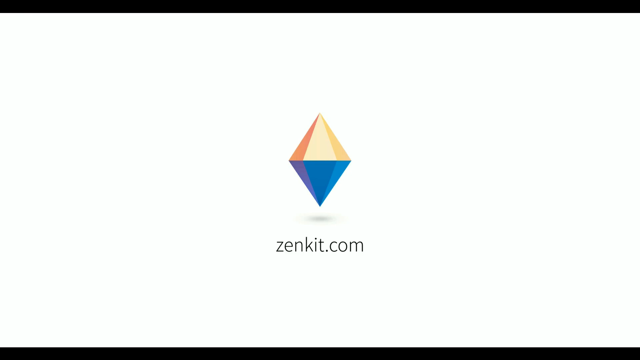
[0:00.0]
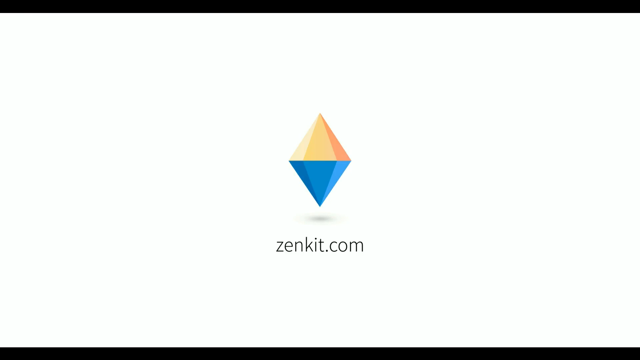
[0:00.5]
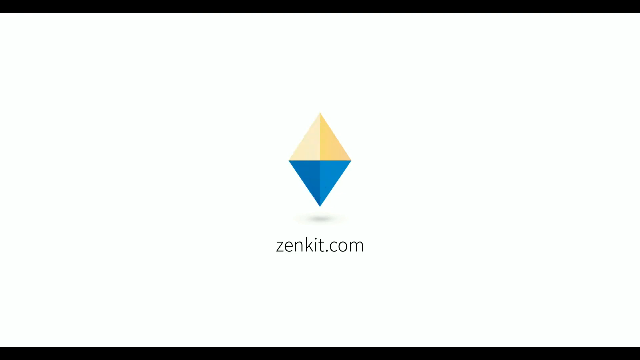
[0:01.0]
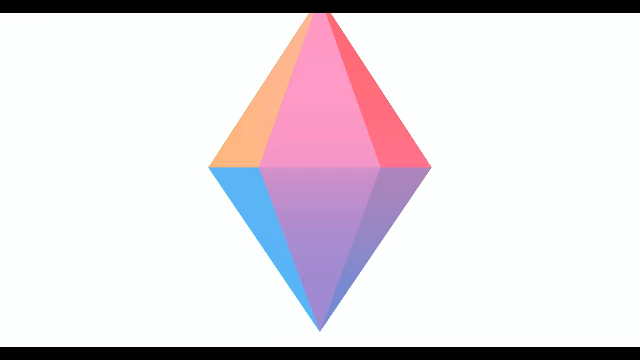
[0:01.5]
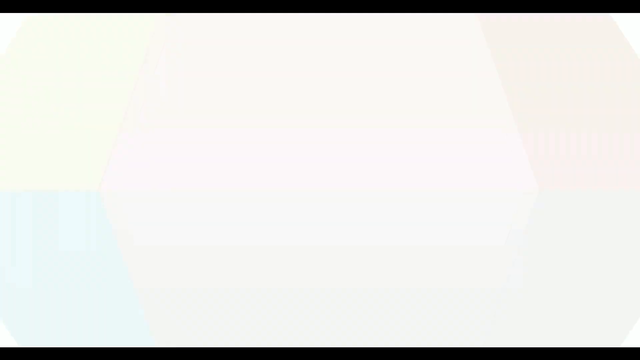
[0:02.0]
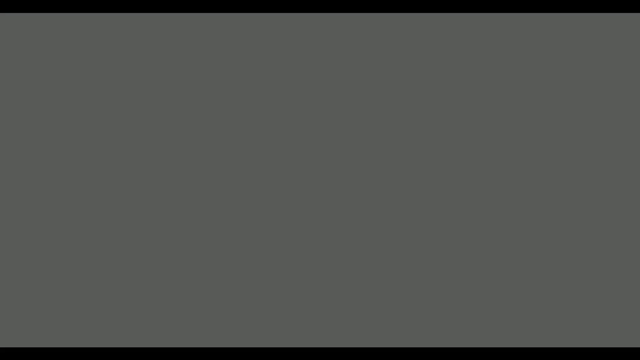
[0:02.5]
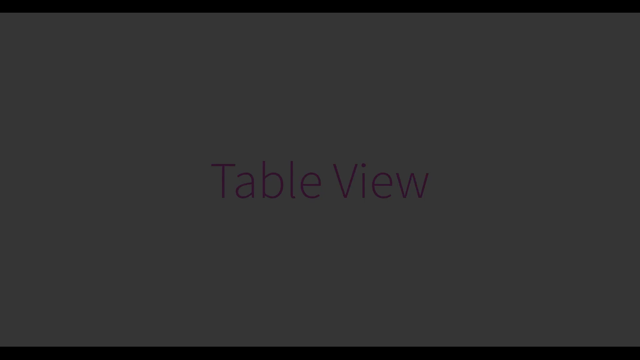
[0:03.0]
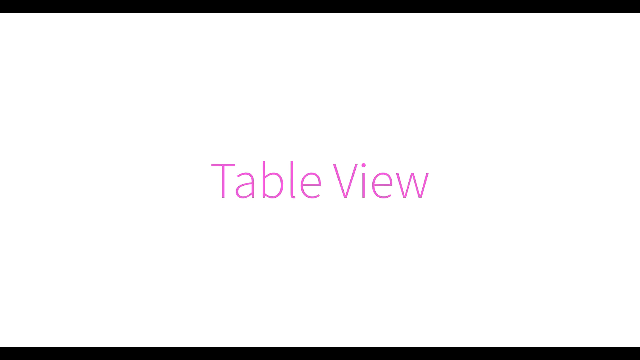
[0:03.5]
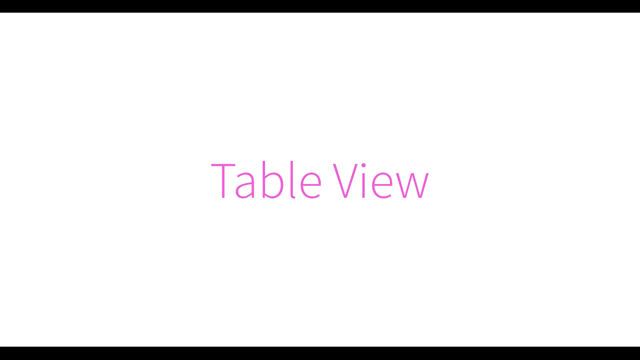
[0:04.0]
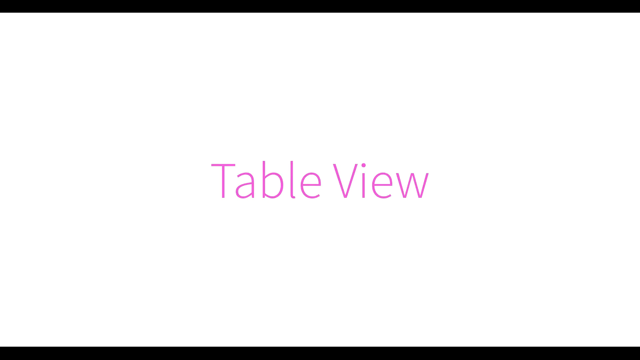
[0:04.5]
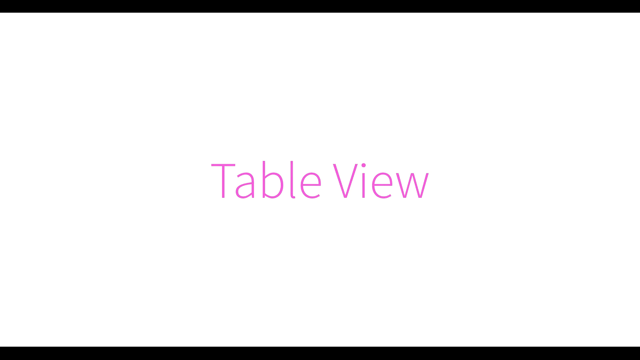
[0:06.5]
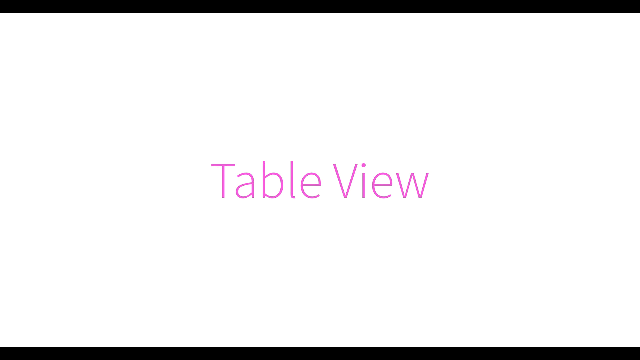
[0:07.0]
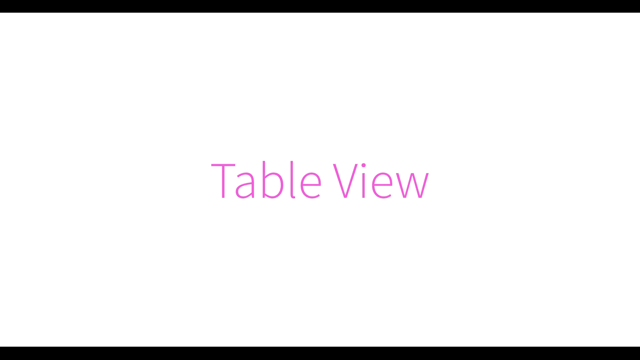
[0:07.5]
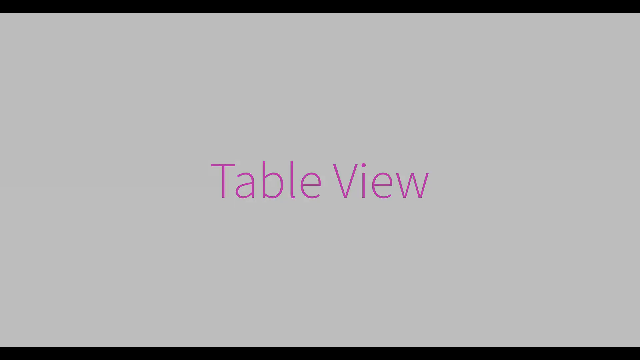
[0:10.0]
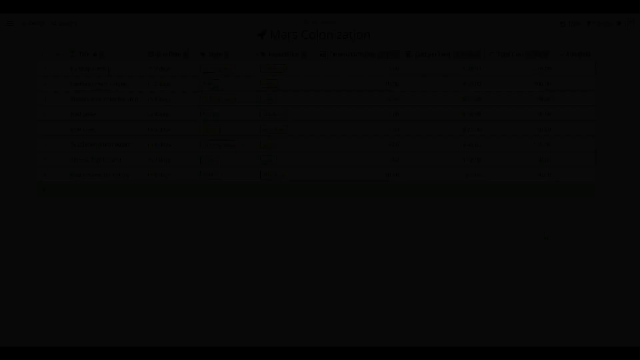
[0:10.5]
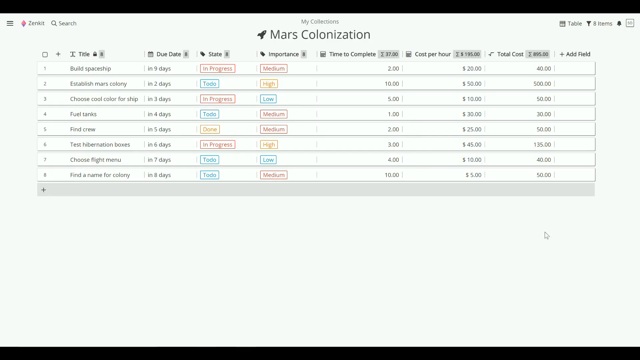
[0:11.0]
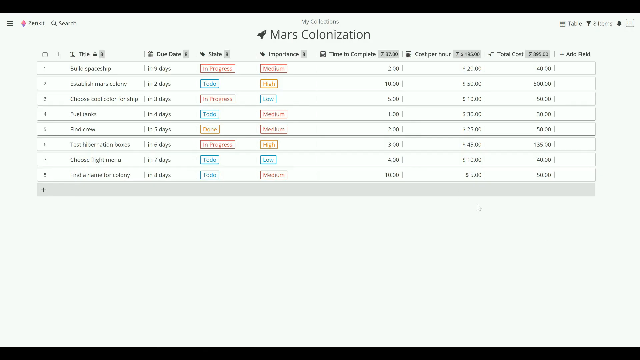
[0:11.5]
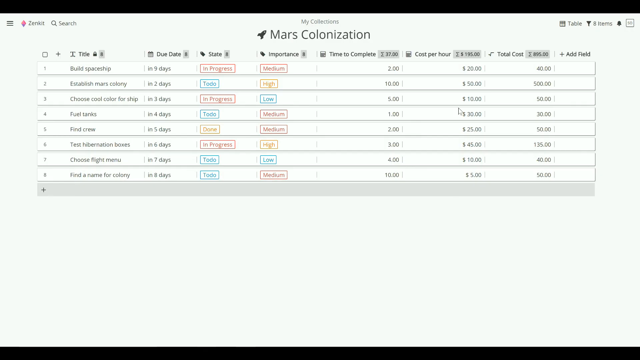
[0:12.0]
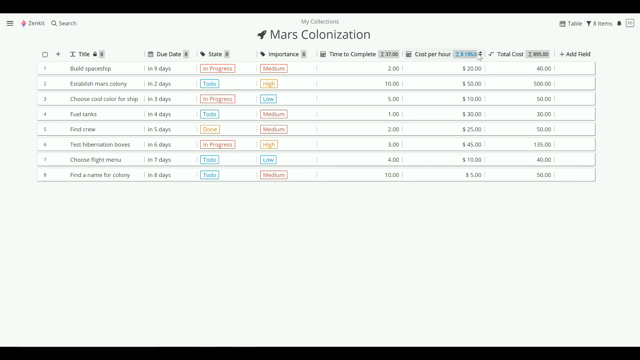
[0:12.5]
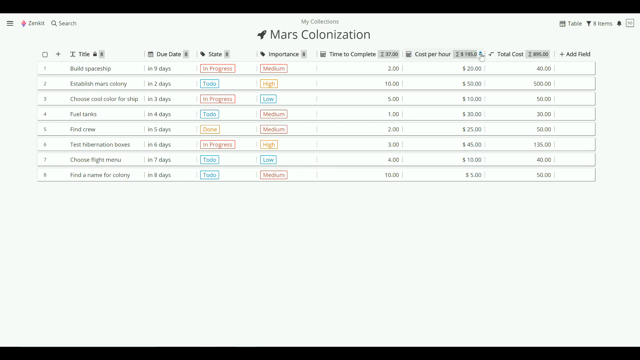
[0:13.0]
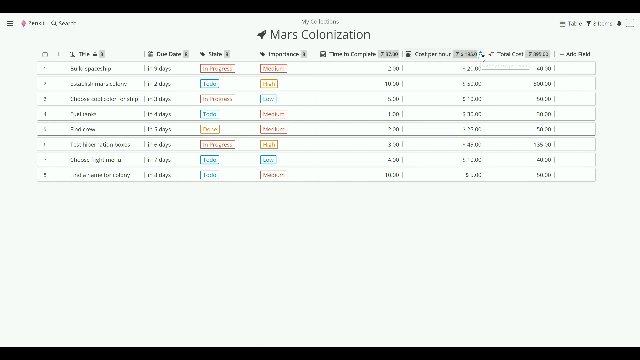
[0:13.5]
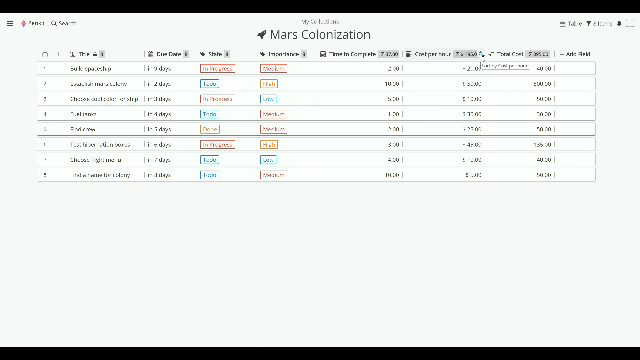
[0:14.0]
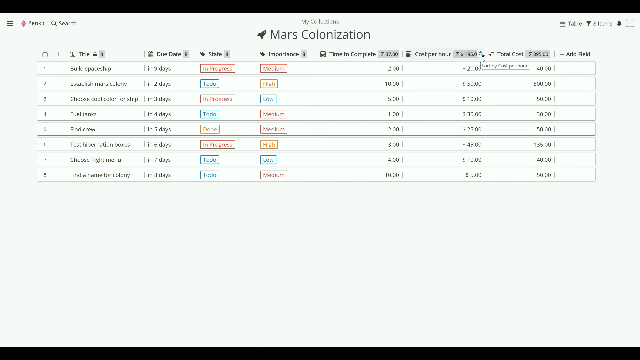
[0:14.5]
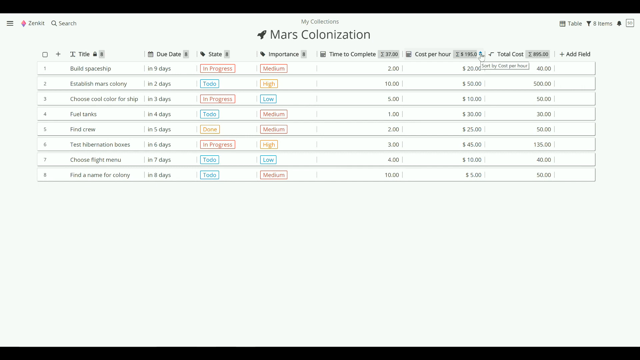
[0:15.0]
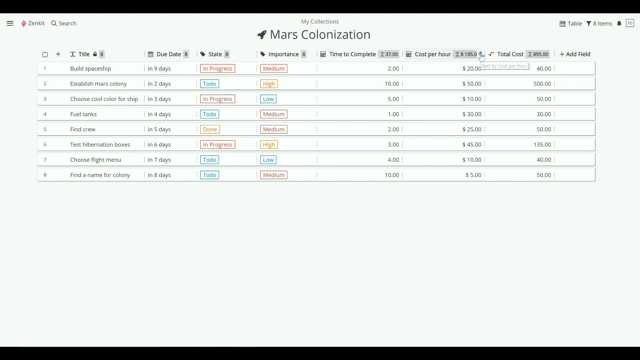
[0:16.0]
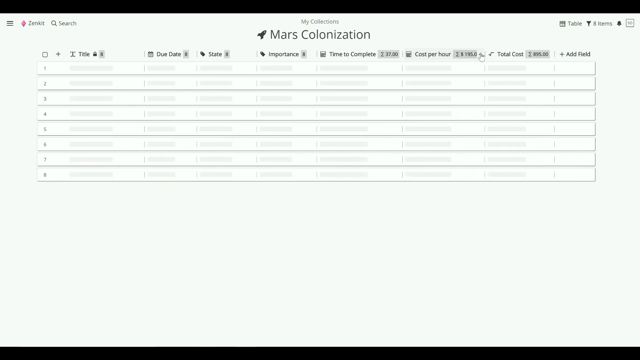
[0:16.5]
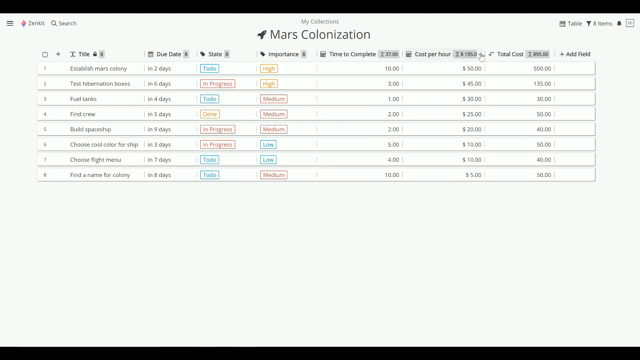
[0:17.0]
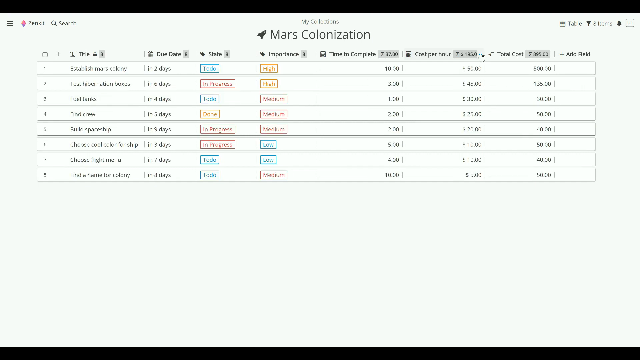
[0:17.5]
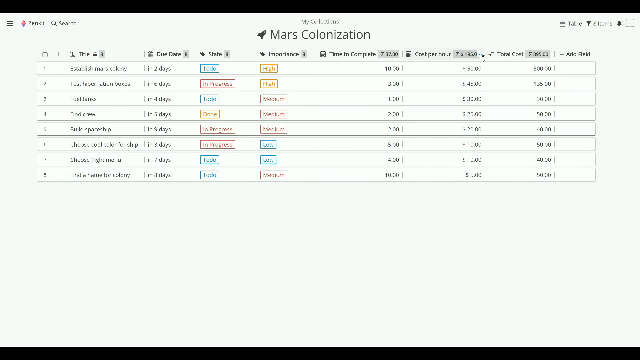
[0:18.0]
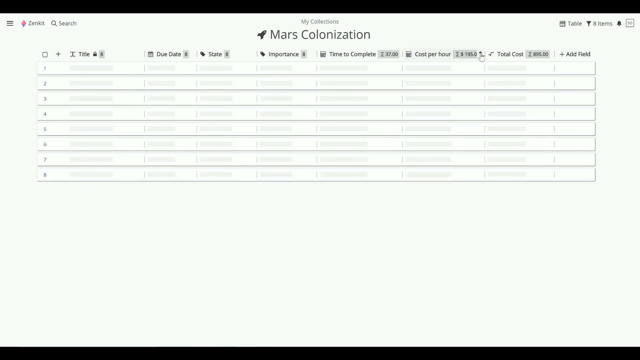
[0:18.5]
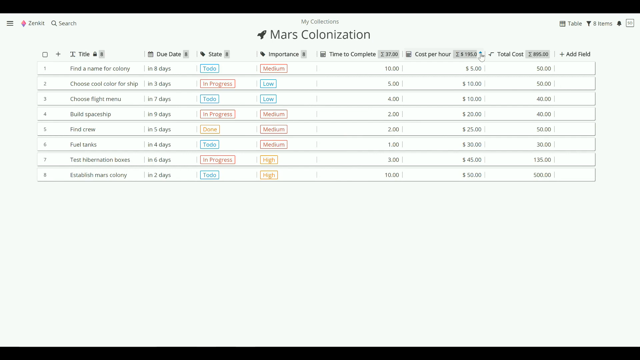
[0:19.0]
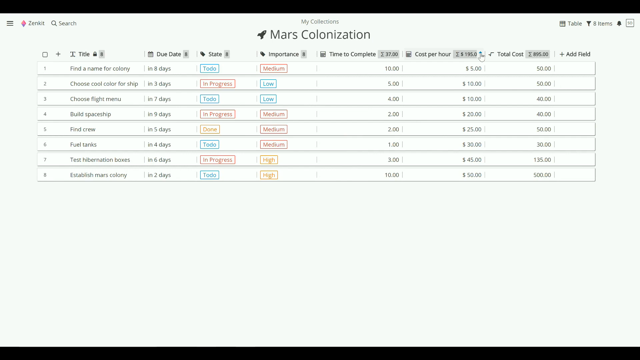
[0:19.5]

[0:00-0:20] The video begins with an icon or abstract image of a diamond whose facets are each a different color of the rainbow, with the colors cycling in a pattern; below it is the text "zenkit.com". The view zooms in and the screen turns white, then fades to black. Purple text in a hairline font reads "Table View", and that screen fades to black. What appears to be the app ZenKit then appears, showing what looks like a spreadsheet titled "Mars Colonization", apparently in a category called "My Collections". In the upper left corner are a menu icon, the ZenKit logo and name, and a search icon. Below is a table of data, probably the table view referenced earlier, with several headings across the top, including "title", "due date", "state" and "importance".